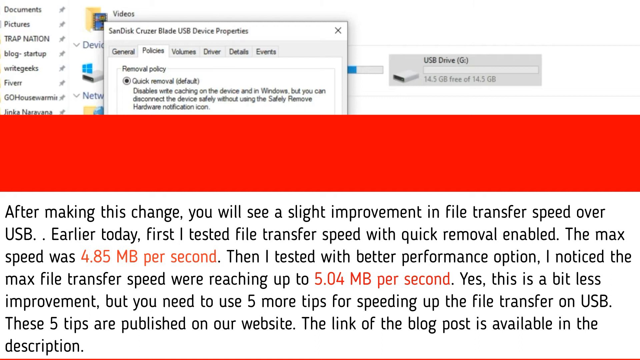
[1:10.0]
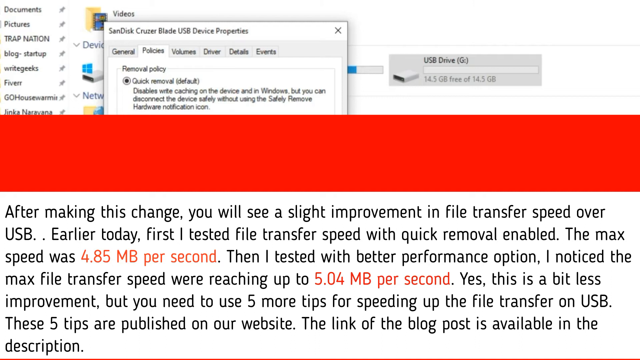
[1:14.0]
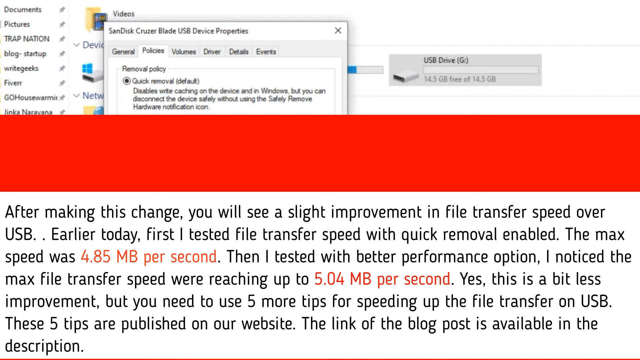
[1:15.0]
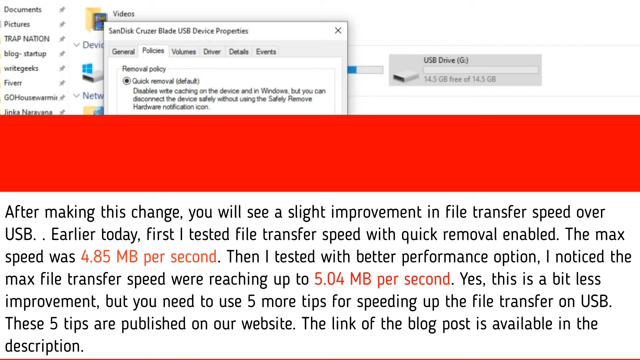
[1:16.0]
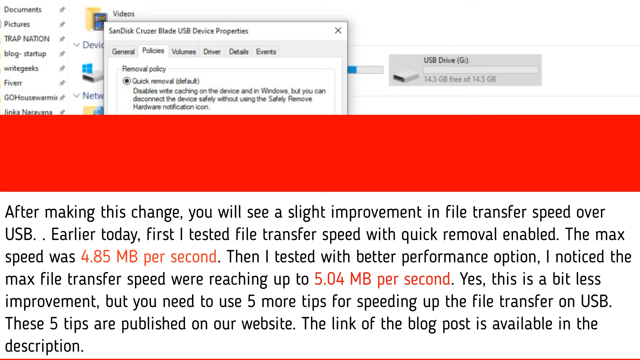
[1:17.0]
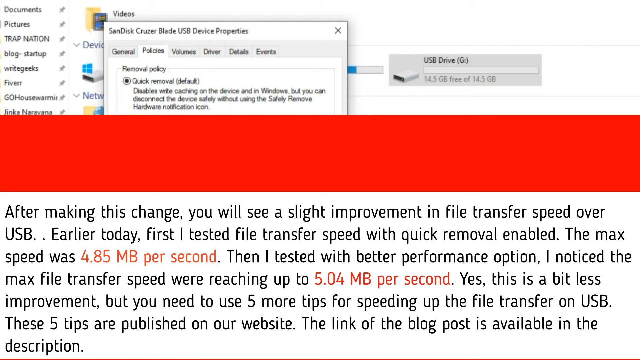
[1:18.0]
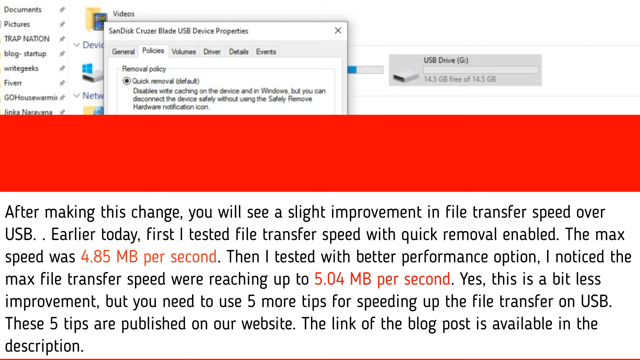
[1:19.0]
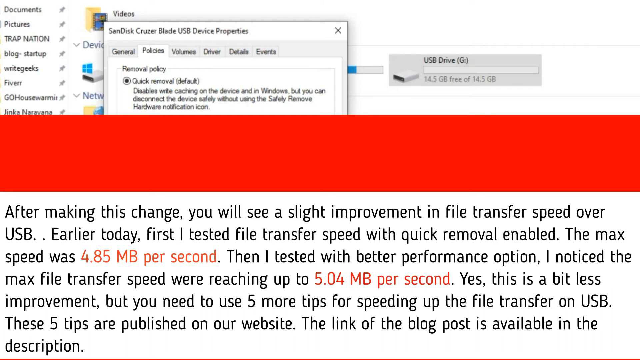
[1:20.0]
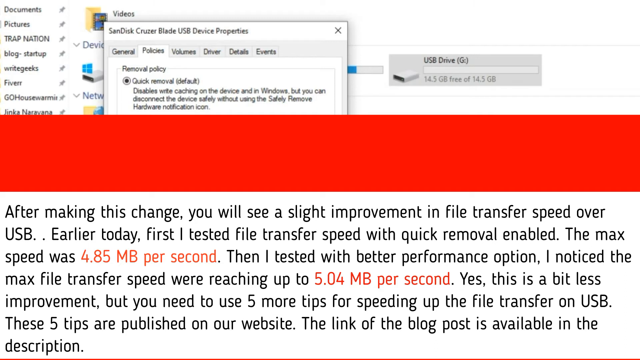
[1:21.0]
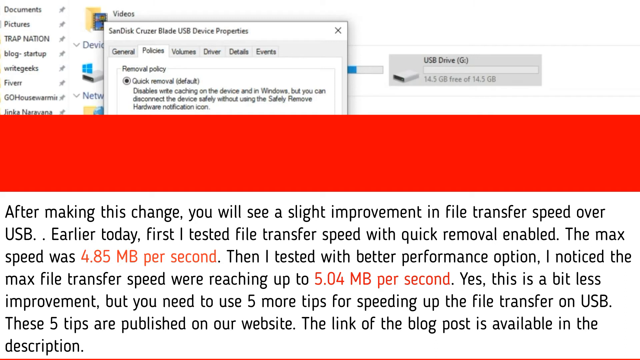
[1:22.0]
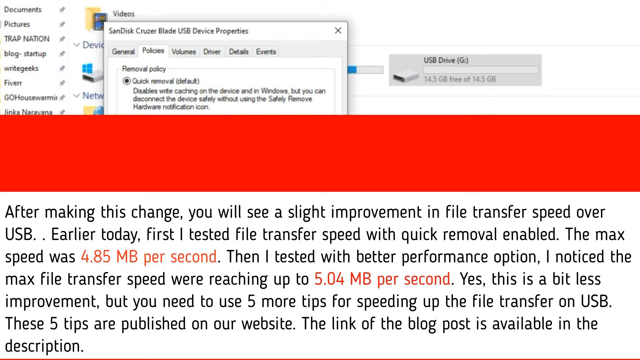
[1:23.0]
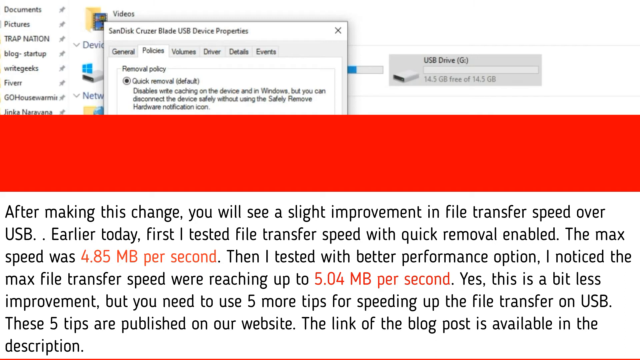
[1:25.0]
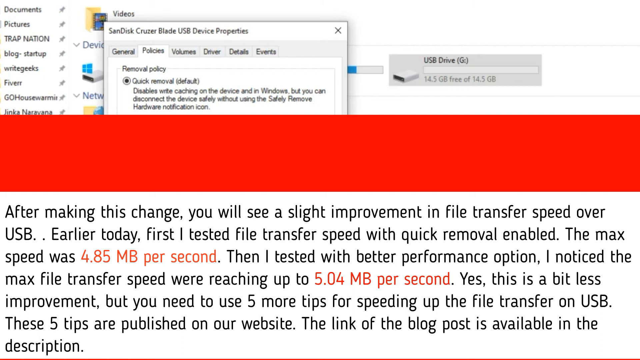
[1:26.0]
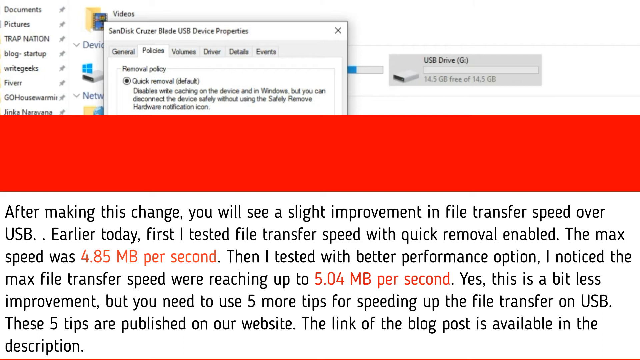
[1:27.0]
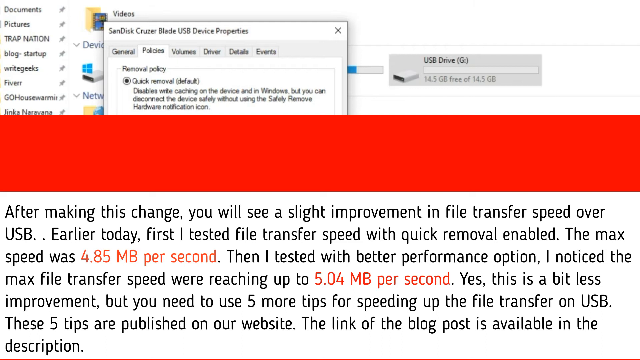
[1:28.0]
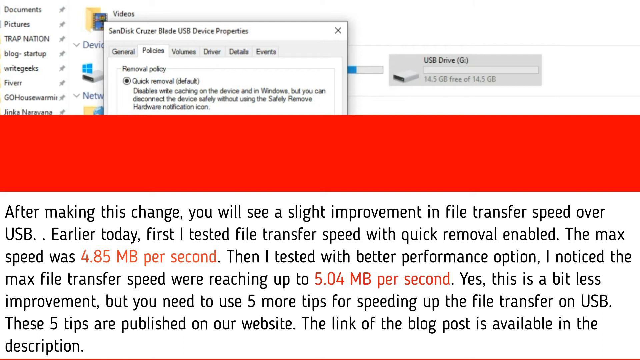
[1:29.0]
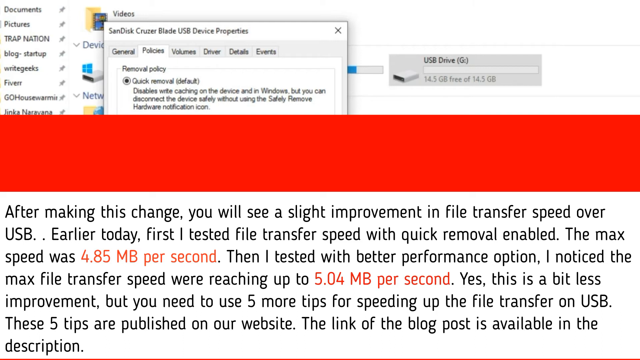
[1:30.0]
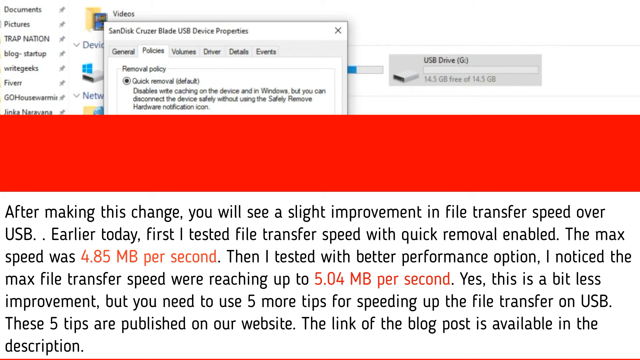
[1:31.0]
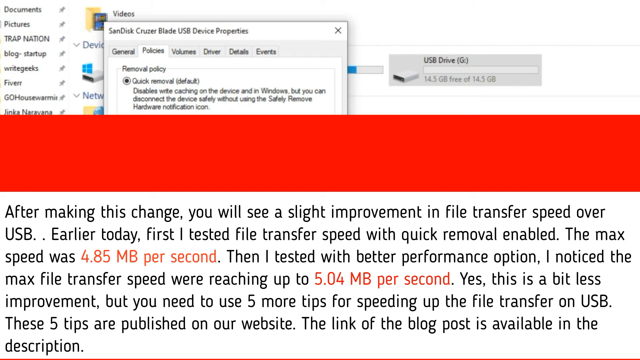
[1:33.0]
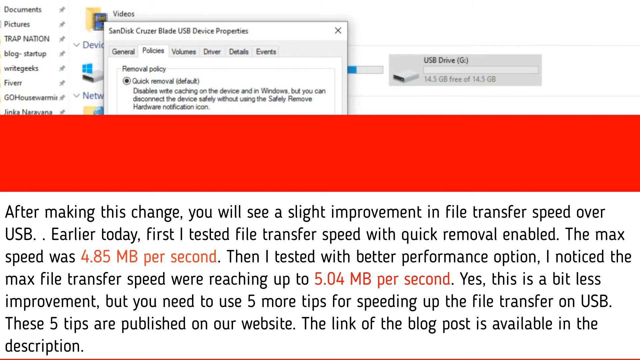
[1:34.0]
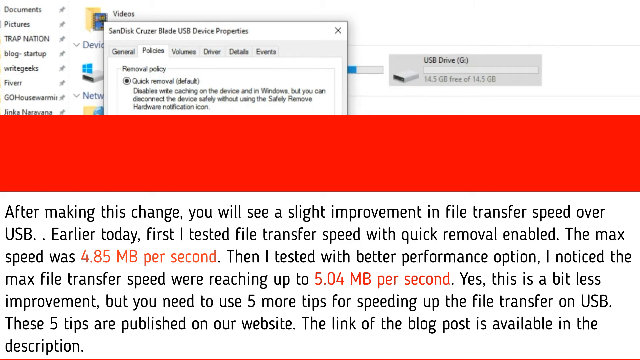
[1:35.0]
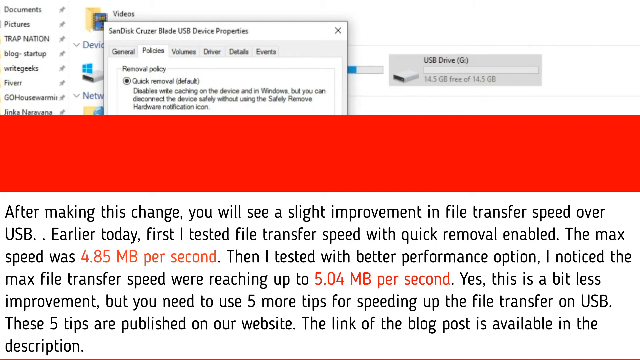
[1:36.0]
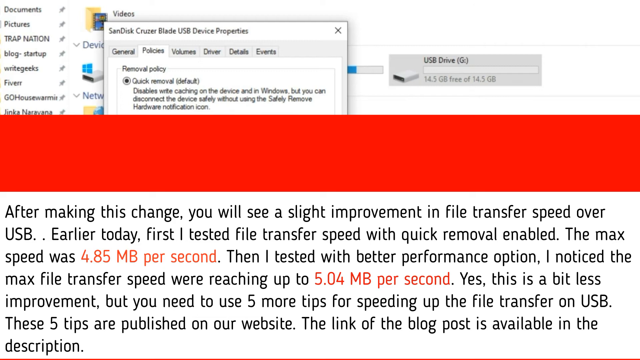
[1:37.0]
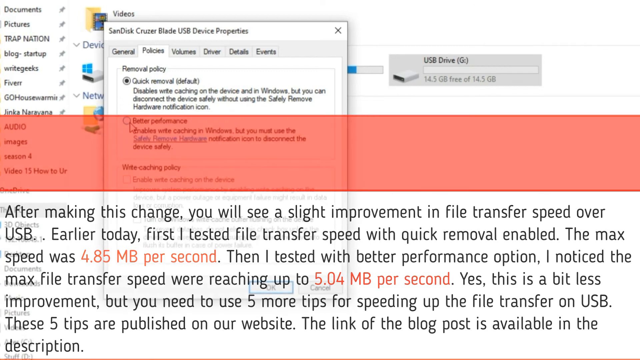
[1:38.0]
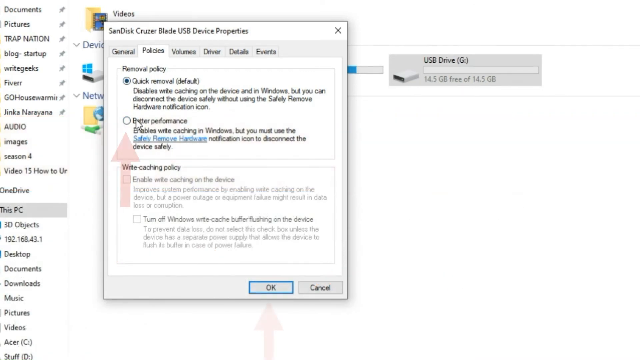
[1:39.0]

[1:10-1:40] Text states that after testing with the better performance option, the max file transfer speed was reaching up to 5.04 mb per second, compared with an earlier max speed of 4.85 mb per second. The text says it is a bit less improvement, but that "five more tips for speeding up the file transfer on USB" are "published on our website" and that "the link of the blog post is available in the description."